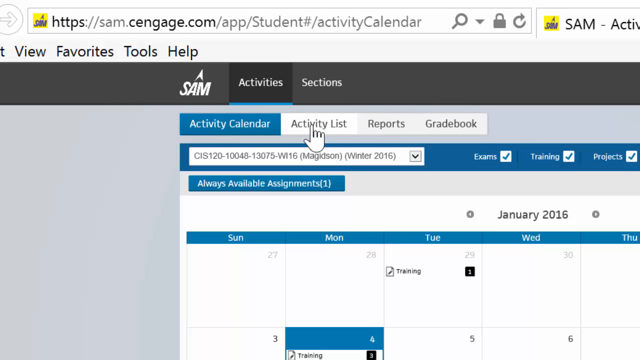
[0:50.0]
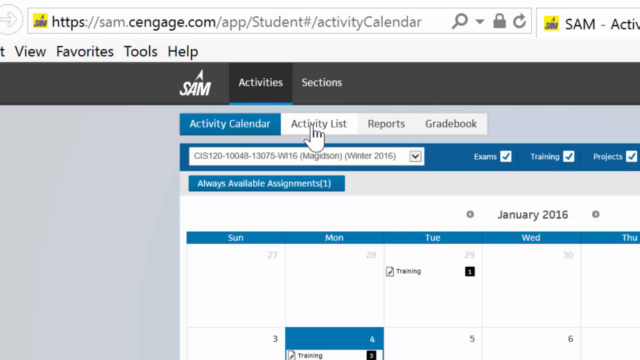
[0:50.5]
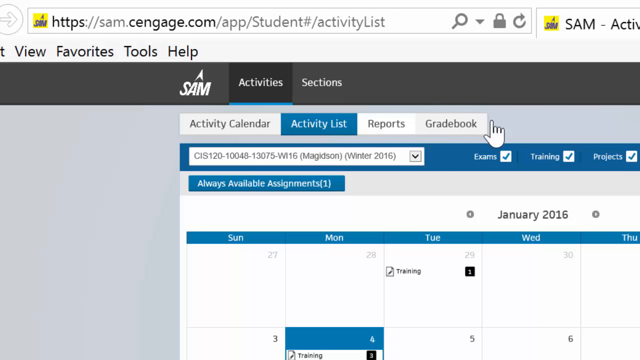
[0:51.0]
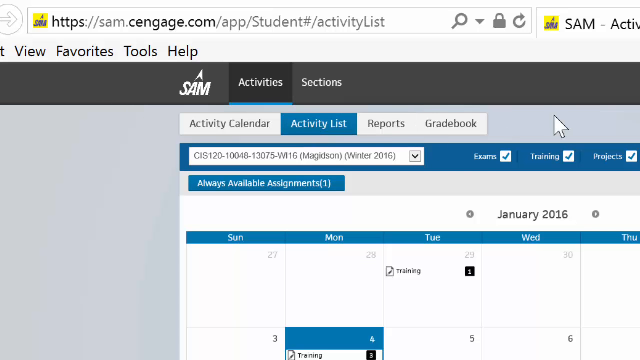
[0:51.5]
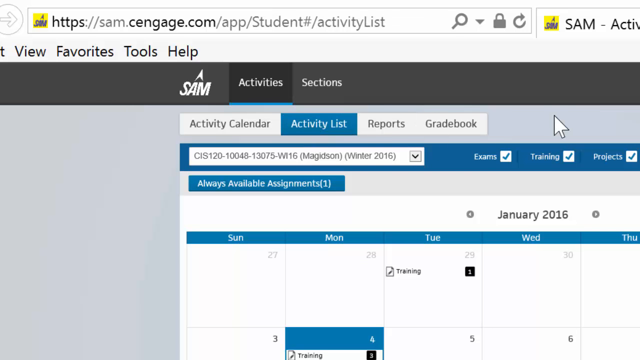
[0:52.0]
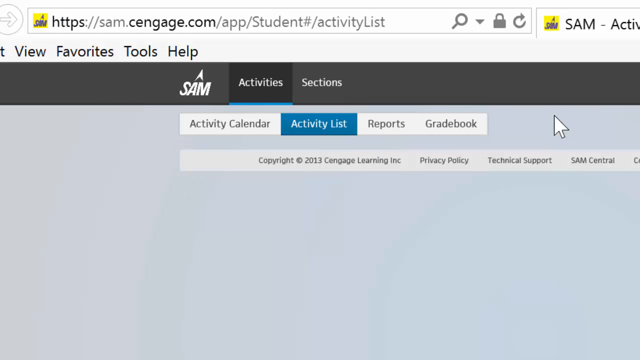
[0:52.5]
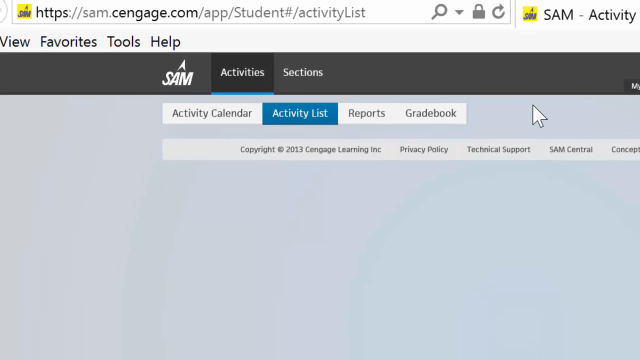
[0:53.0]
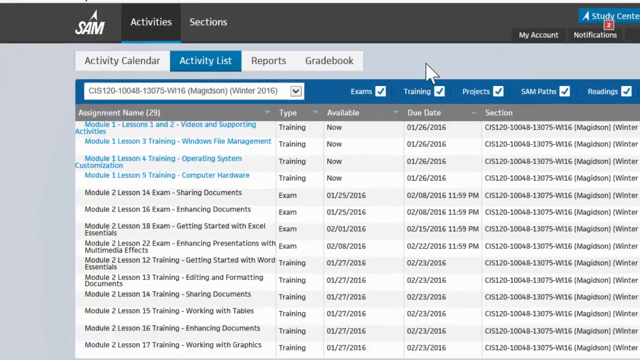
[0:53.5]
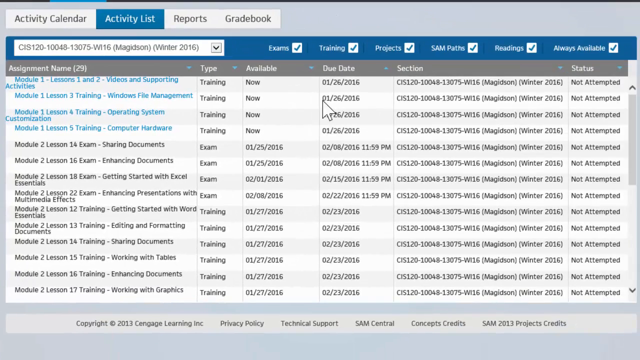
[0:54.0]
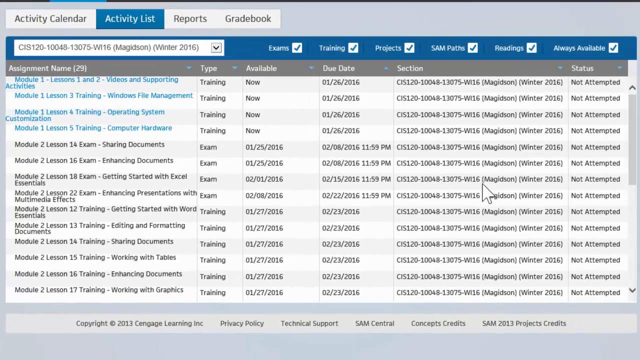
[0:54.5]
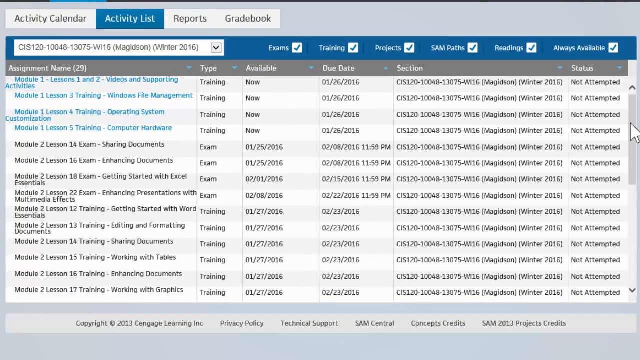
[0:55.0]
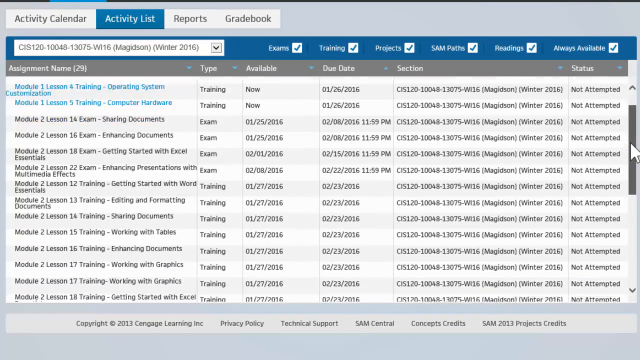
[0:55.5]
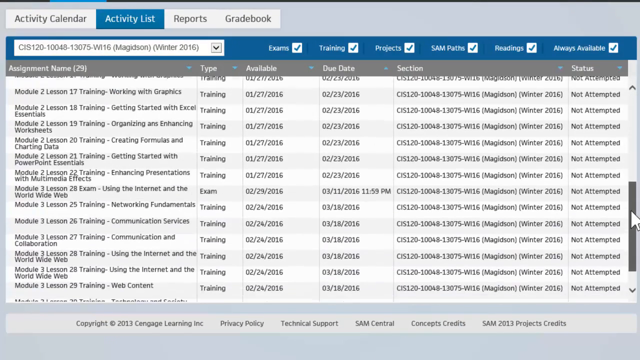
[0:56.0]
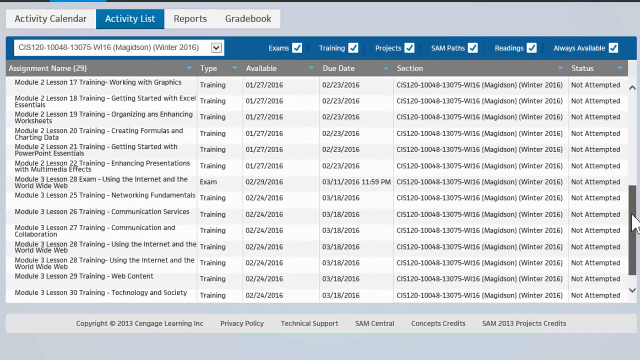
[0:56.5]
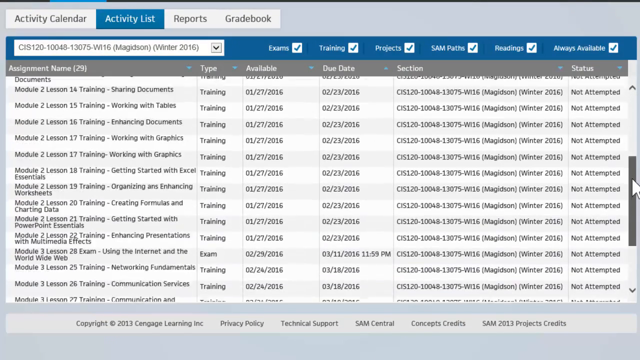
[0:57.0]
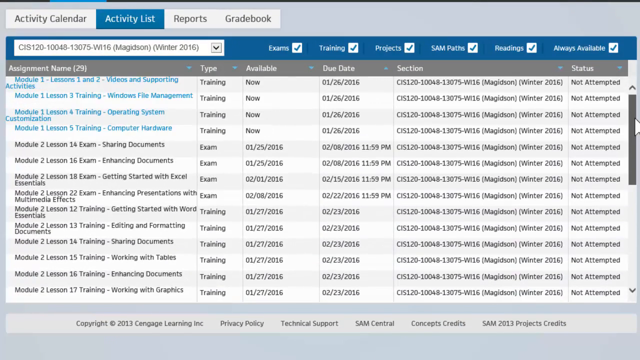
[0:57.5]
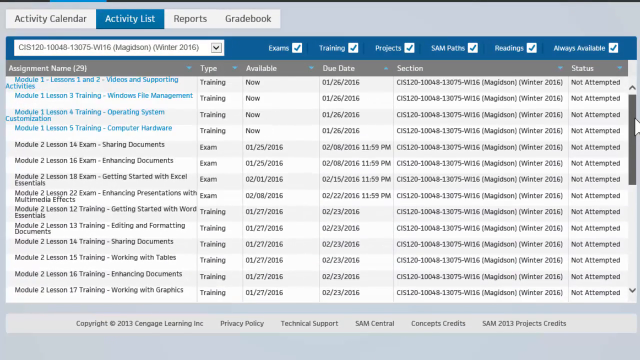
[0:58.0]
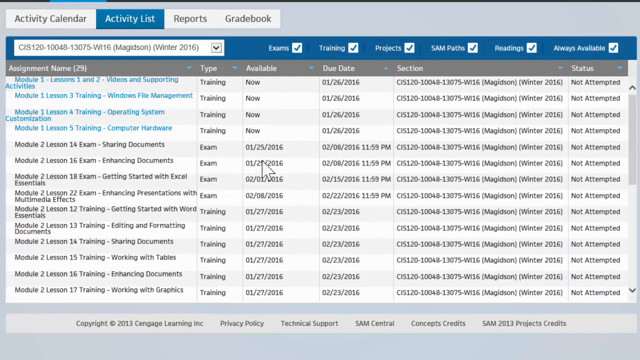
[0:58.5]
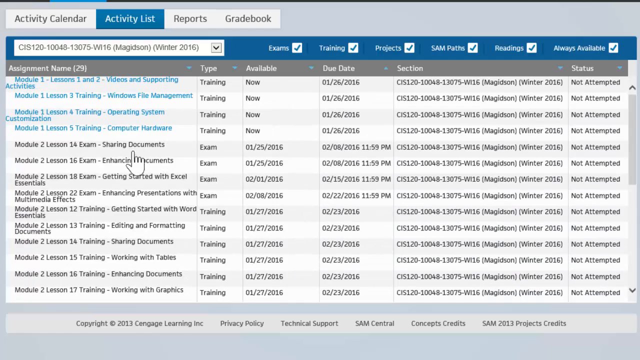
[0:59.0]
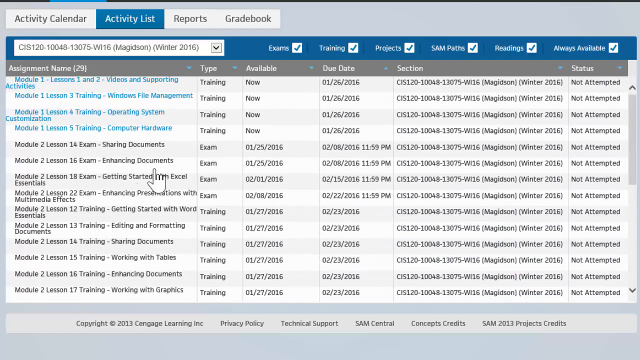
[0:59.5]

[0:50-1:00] A portion of a web page is shown, with a hand-shaped cursor moving over black writing placed side by side; the writing on the left side is instead white on a blue background. As it moves, the cursor changes from a hand to an arrow. A different screen then appears with a list of words in a black font. The cursor moves to the right of the image and scrolls down a fairly long list.